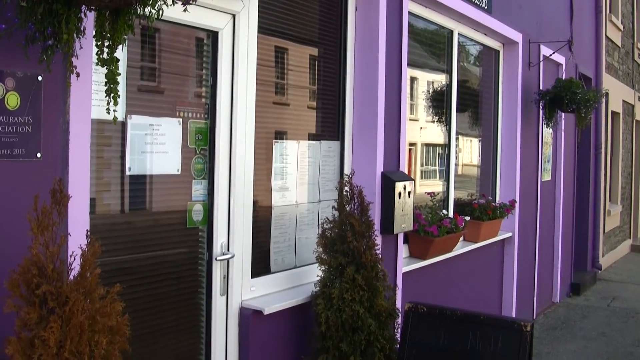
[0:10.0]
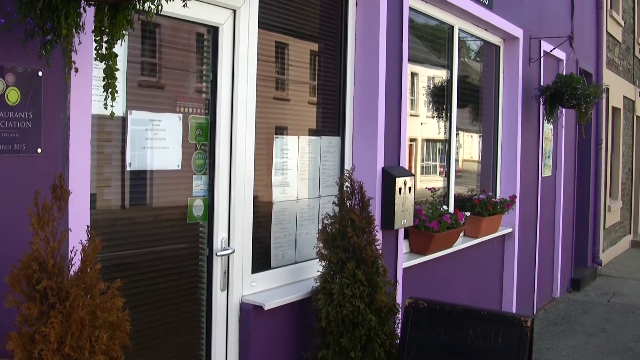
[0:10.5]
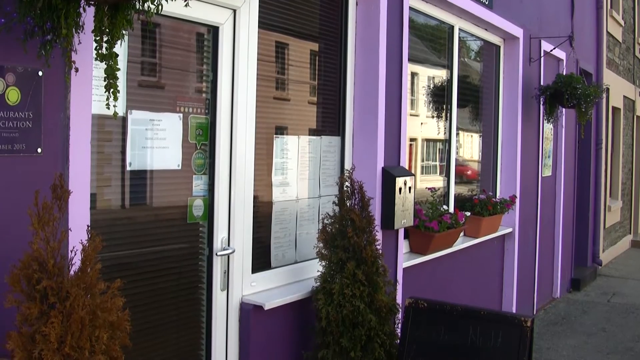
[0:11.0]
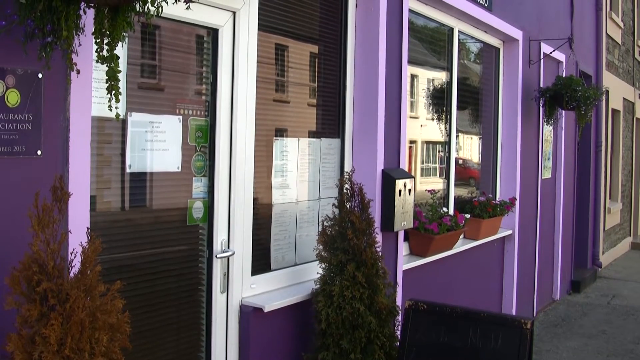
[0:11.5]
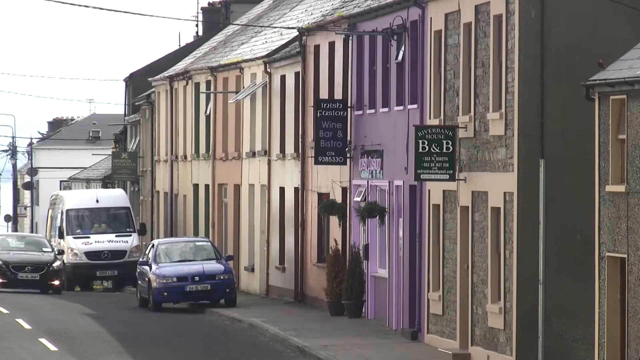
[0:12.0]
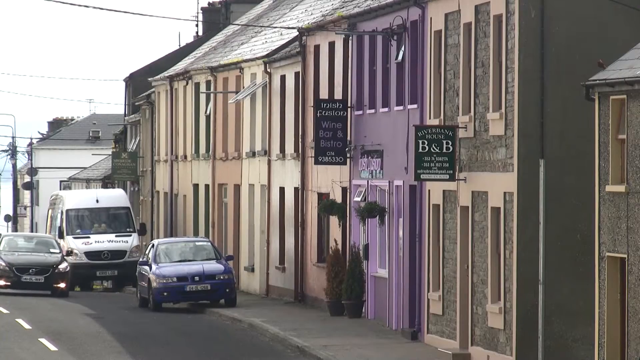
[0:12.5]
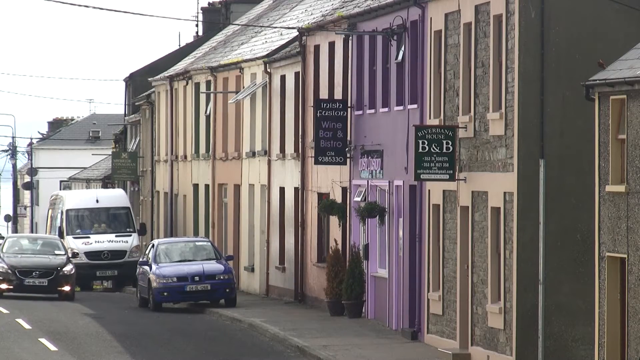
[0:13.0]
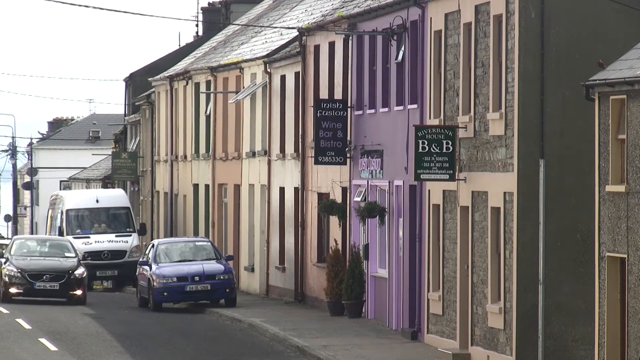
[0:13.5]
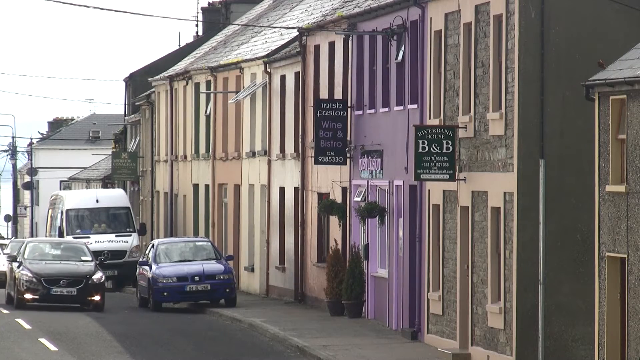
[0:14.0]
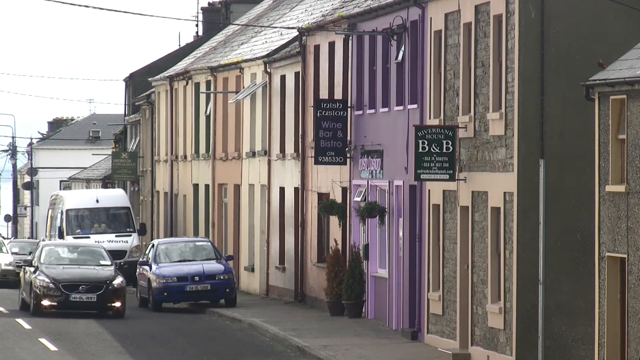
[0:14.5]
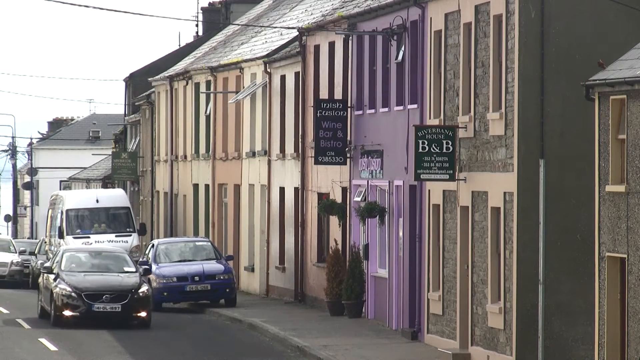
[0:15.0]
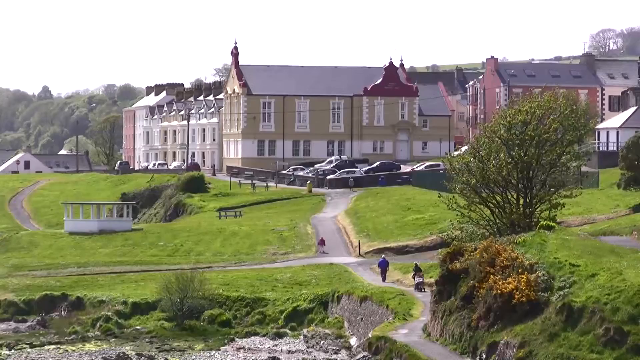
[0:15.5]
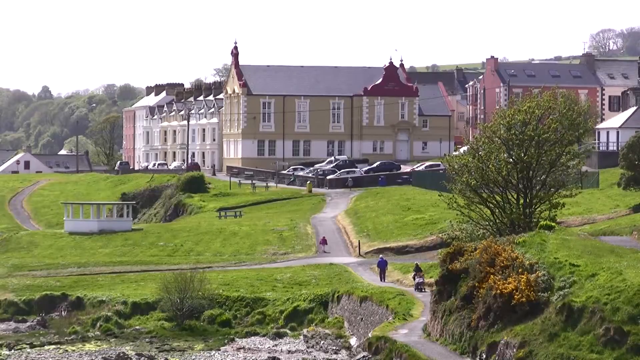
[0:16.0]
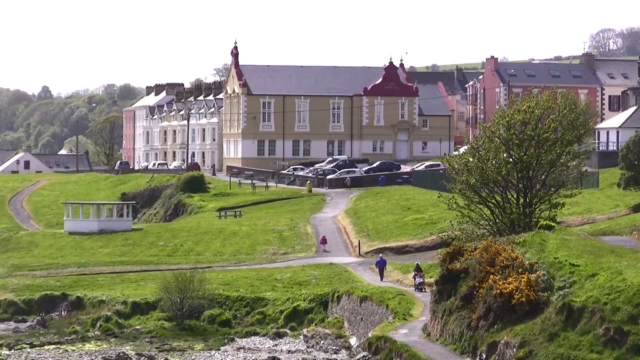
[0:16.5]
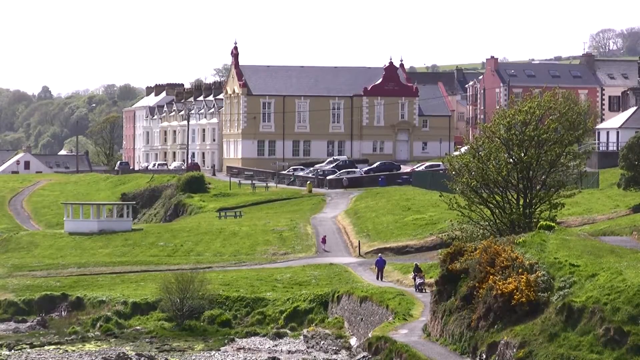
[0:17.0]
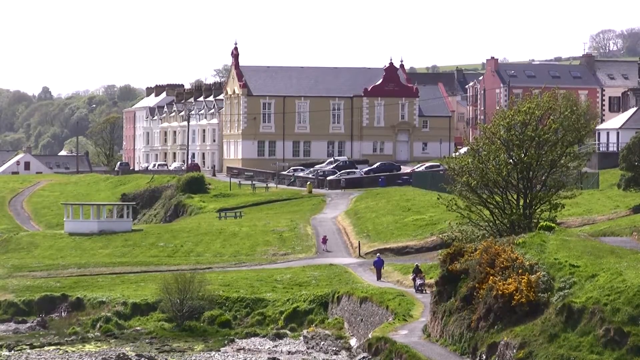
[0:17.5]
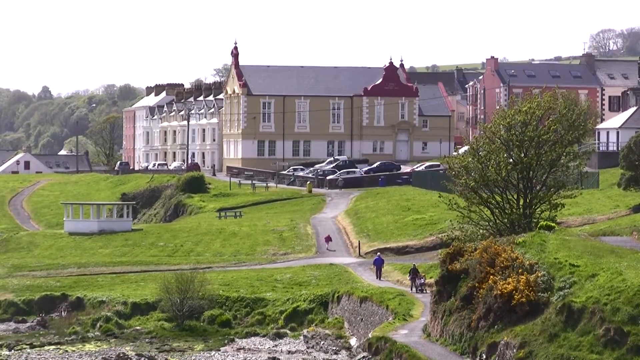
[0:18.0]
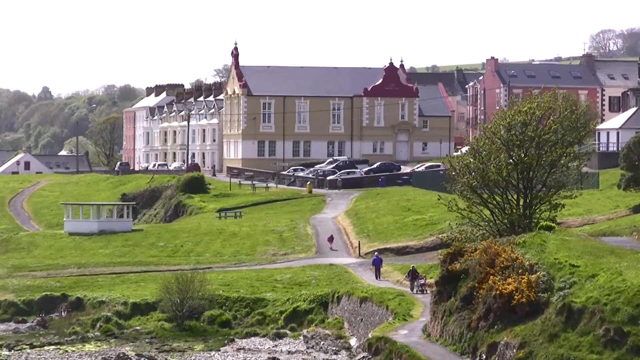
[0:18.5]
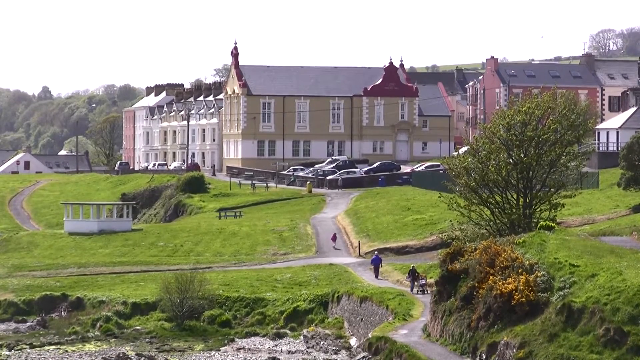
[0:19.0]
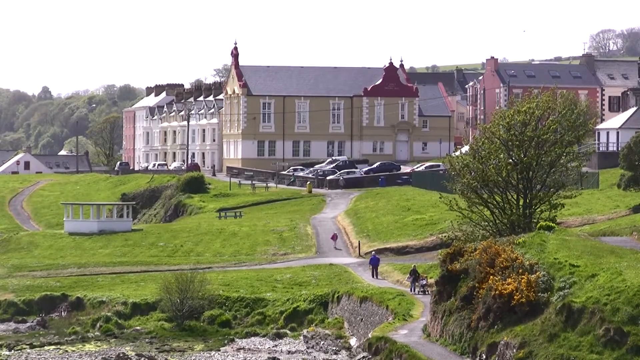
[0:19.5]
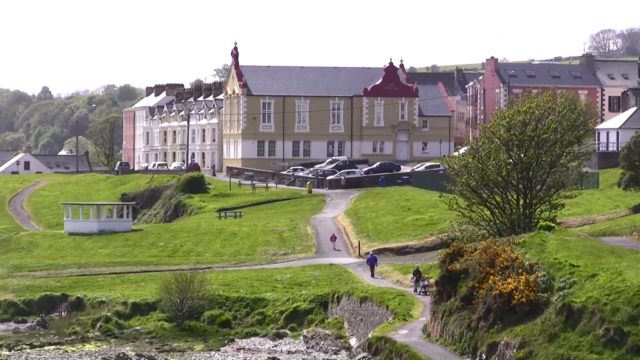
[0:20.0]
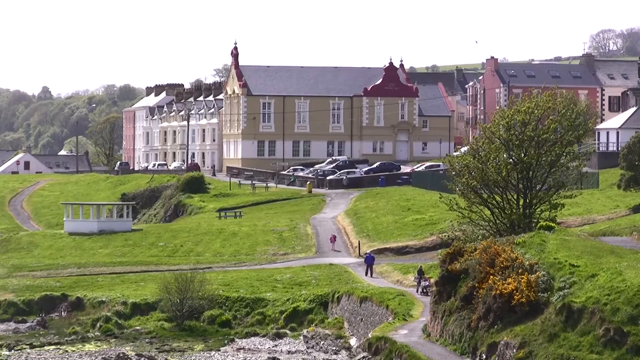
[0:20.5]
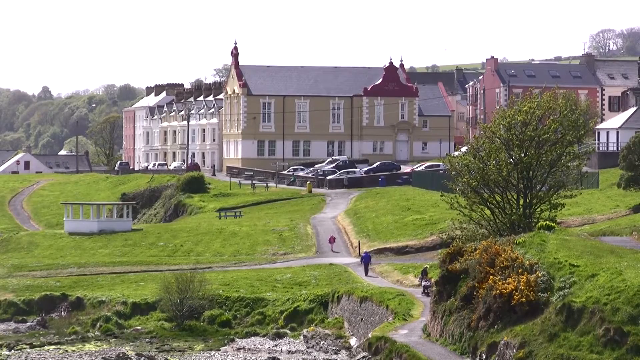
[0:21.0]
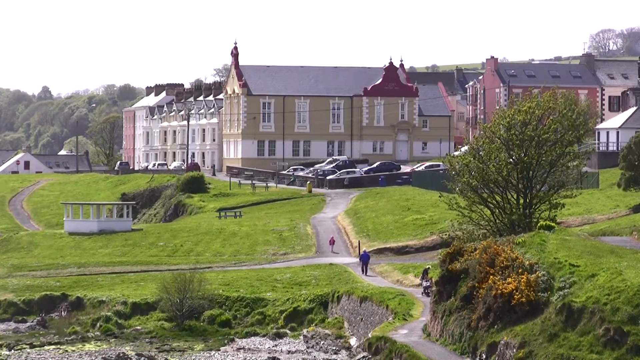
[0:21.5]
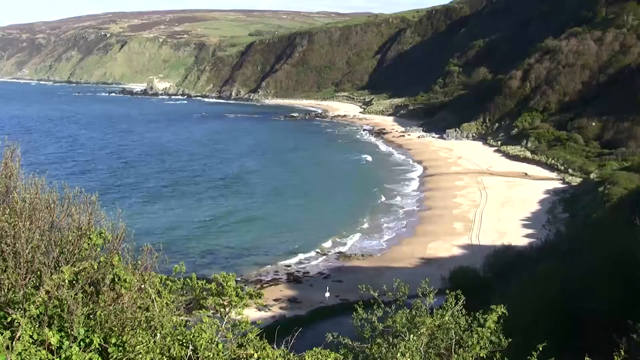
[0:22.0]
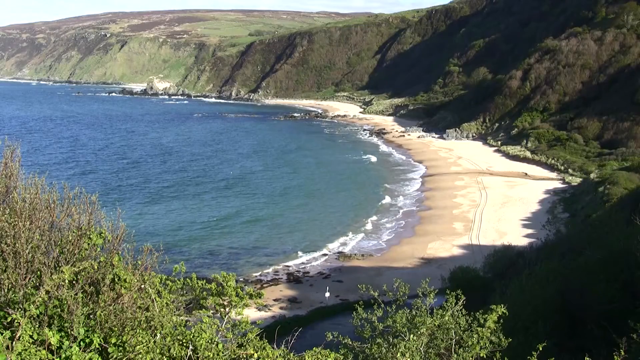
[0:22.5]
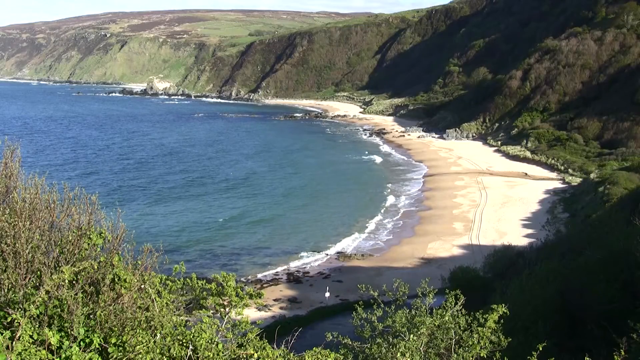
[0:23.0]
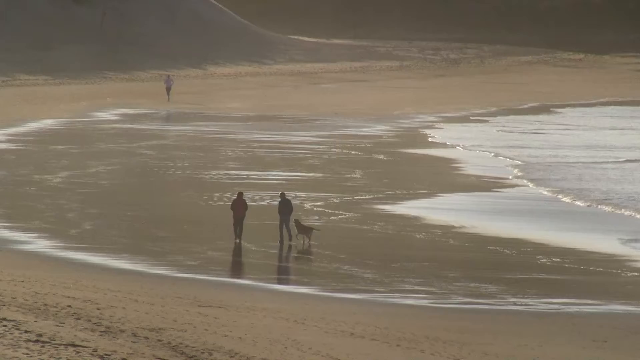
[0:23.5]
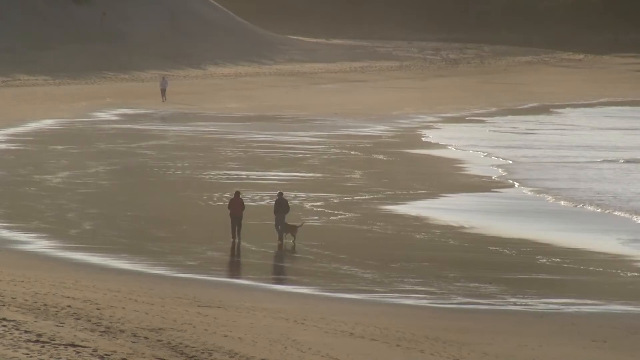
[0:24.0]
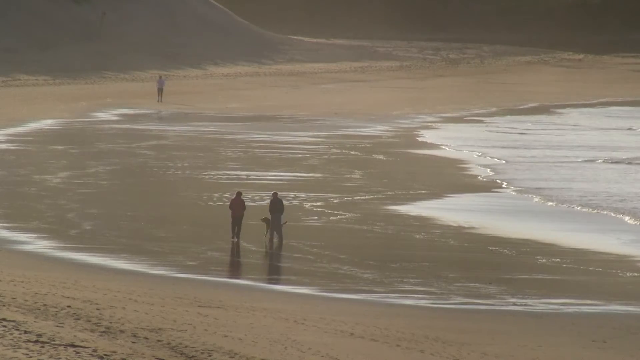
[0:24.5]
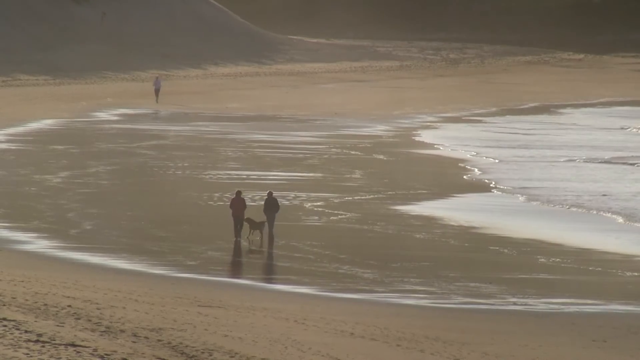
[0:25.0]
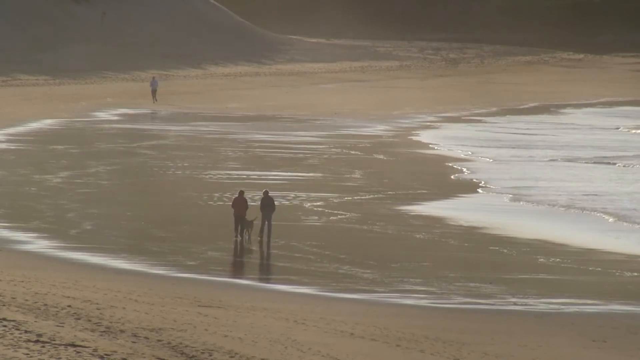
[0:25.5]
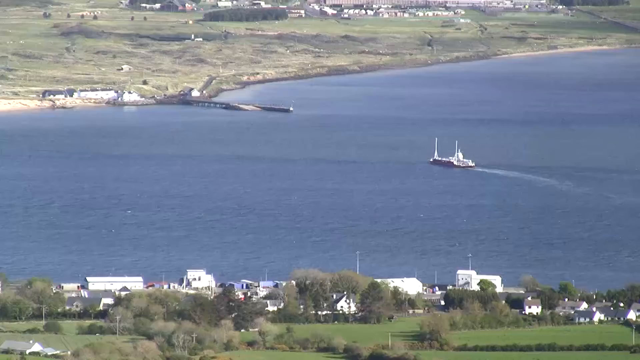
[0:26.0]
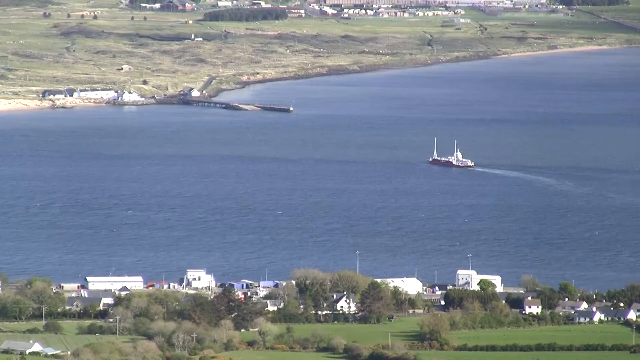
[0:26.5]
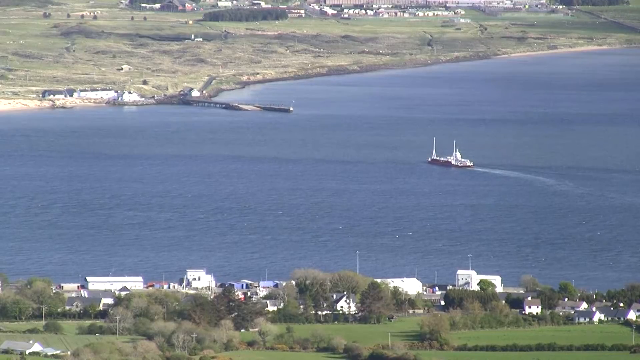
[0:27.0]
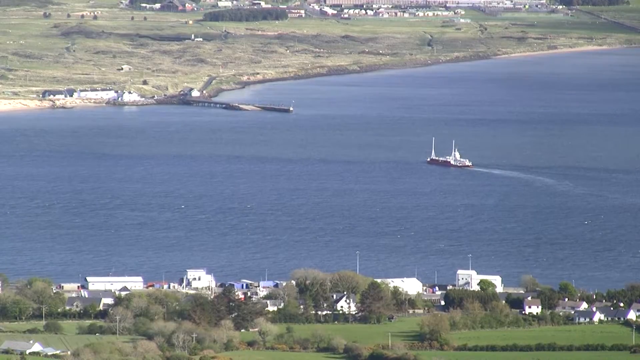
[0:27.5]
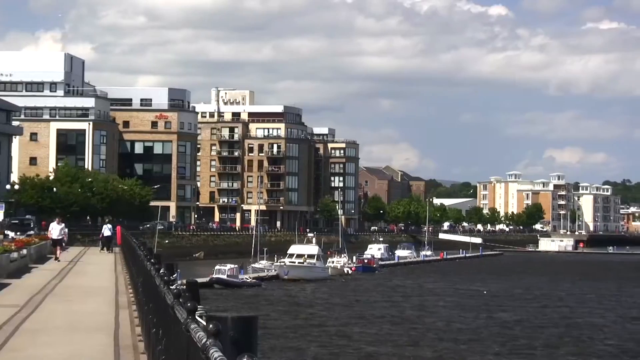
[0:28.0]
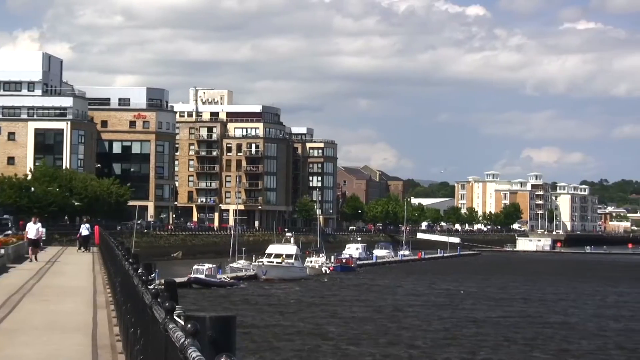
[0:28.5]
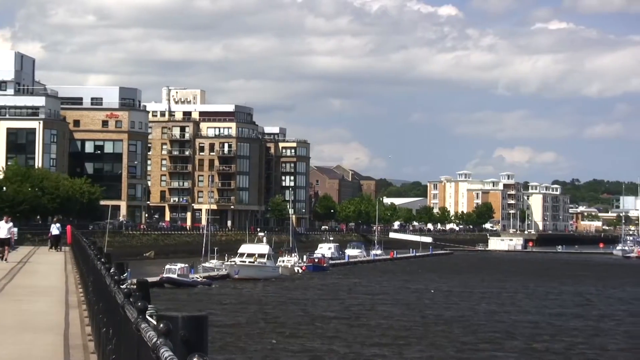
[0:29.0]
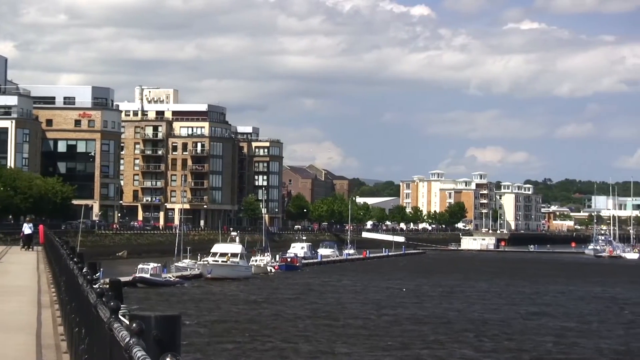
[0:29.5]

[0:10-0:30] The view cuts to the right, looking down the street, where a row of more storefronts is attached to the purple building, and a car with European license plates drives down the street. The video then shifts through a series of different landscapes, which seem to be of different parts of the town. First is a school campus that looks like an old one. Next is the beach: a zoomed-out shot of the sand and the mountains, then a zoomed-in shot of people walking on the sand. After that comes an aerial view of boats on the water, followed by a pan of a downtown that is kind of a harbor downtown, with newer apartments around the water and lots of boats.